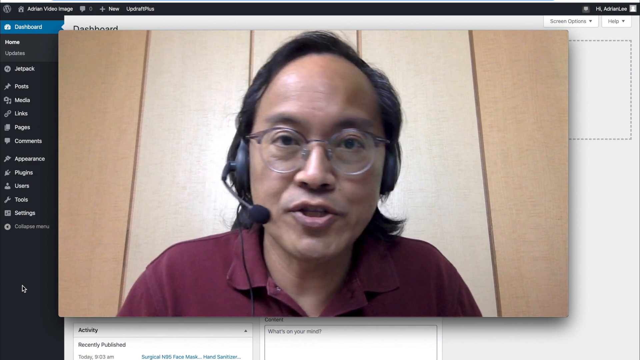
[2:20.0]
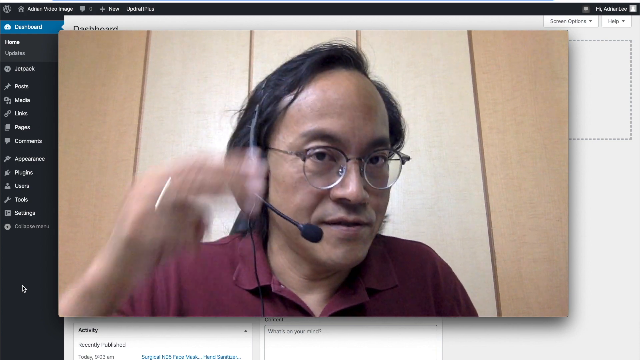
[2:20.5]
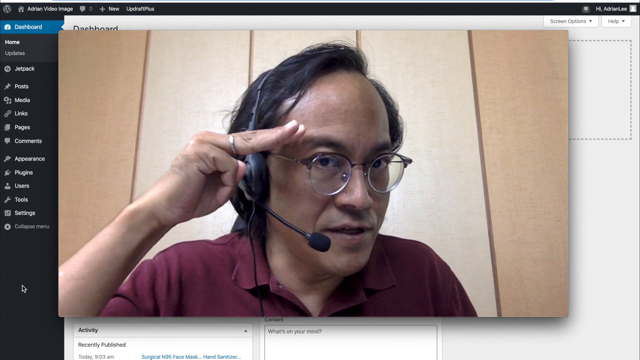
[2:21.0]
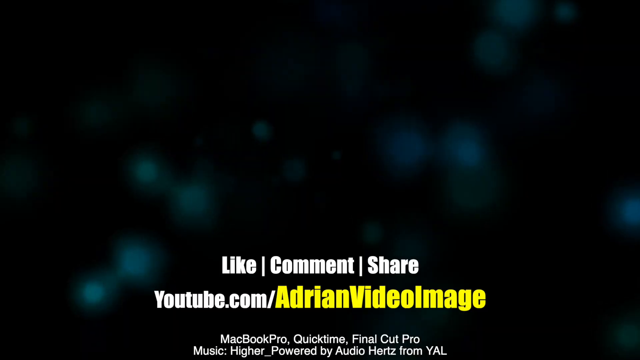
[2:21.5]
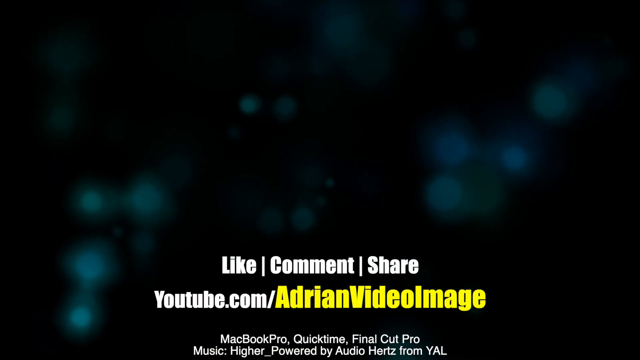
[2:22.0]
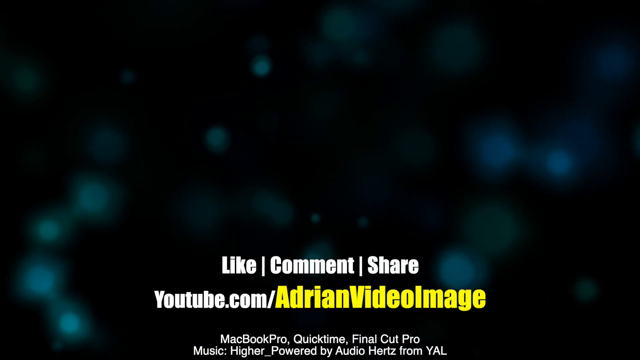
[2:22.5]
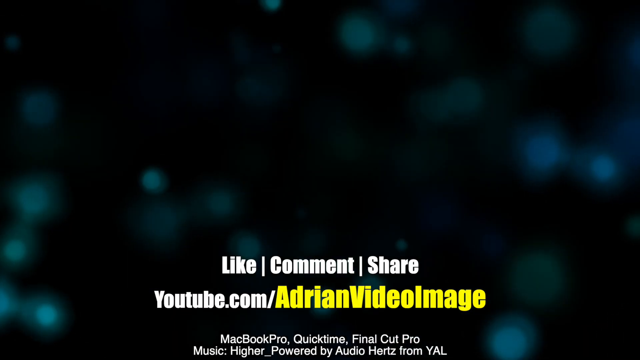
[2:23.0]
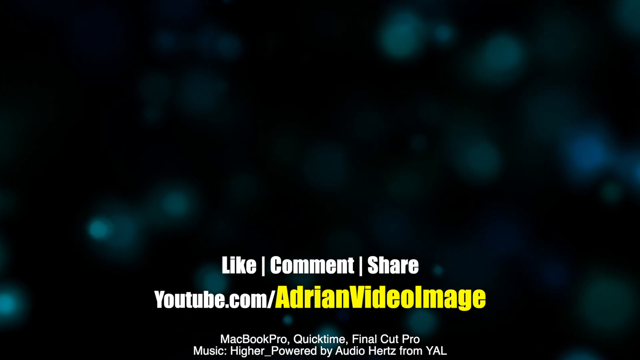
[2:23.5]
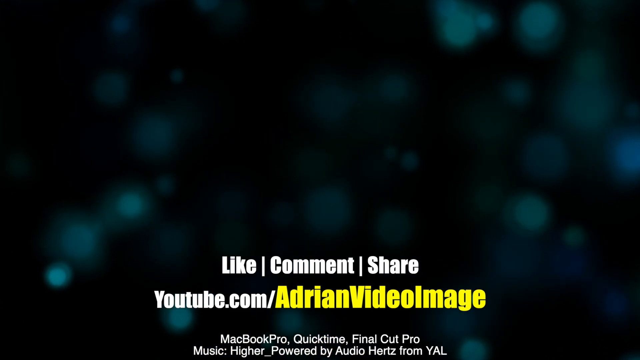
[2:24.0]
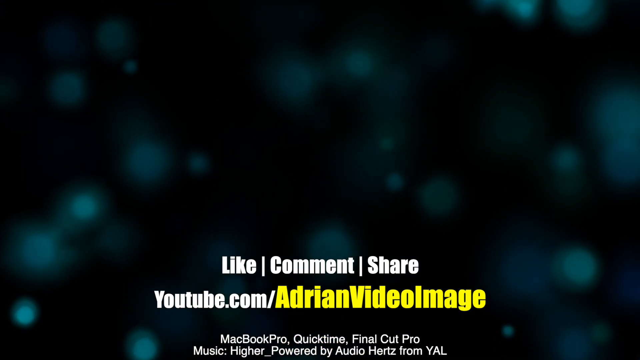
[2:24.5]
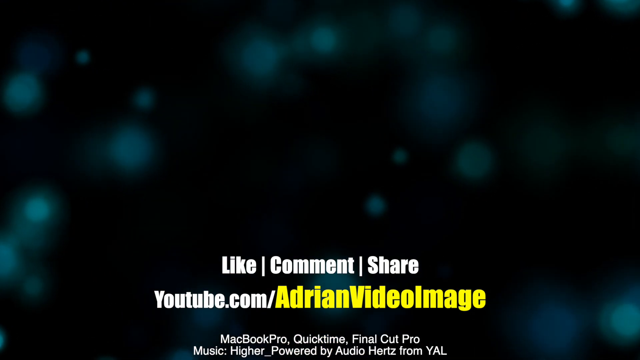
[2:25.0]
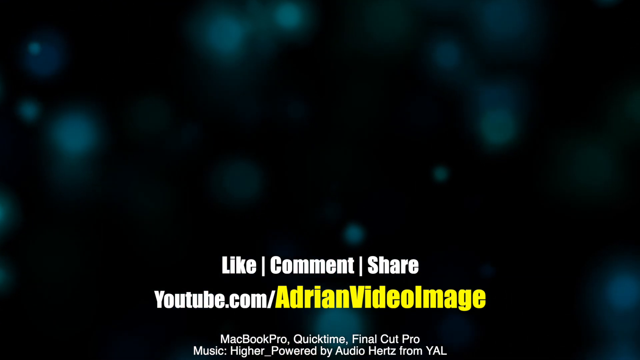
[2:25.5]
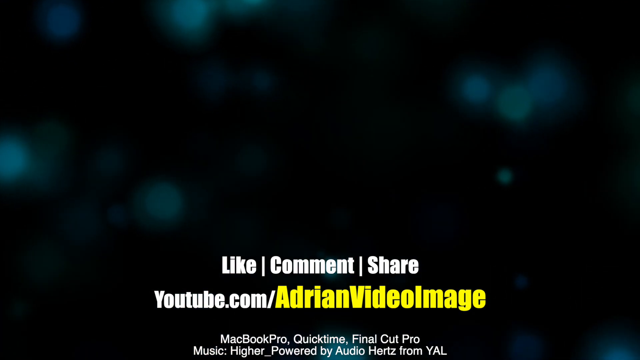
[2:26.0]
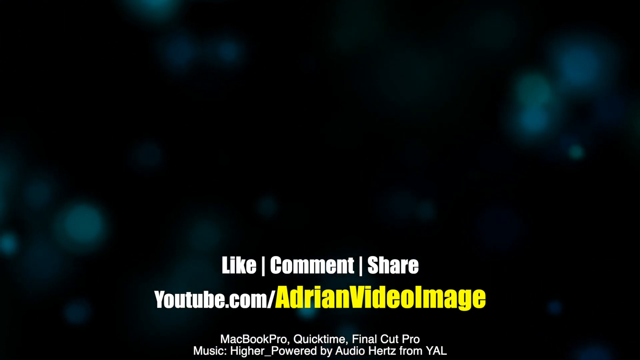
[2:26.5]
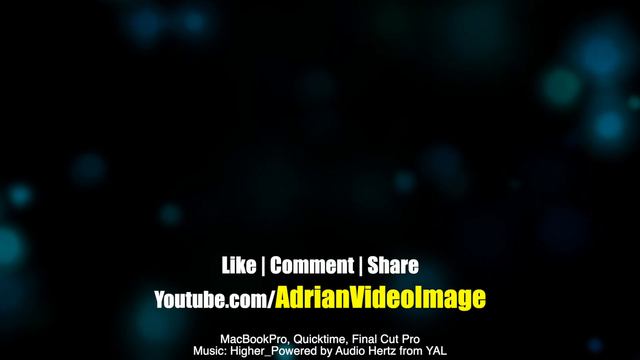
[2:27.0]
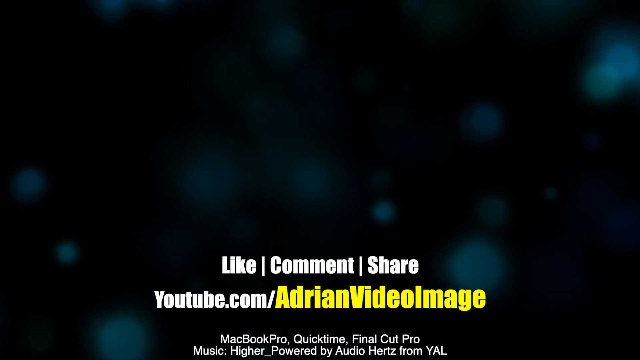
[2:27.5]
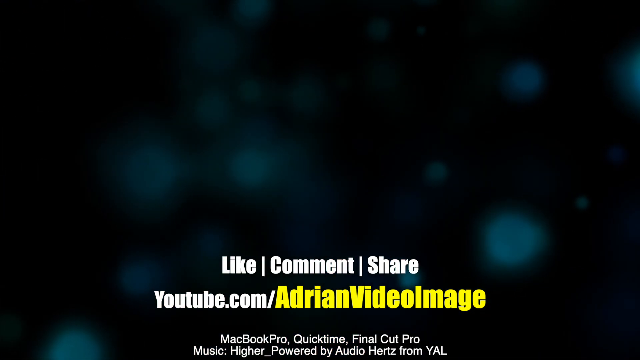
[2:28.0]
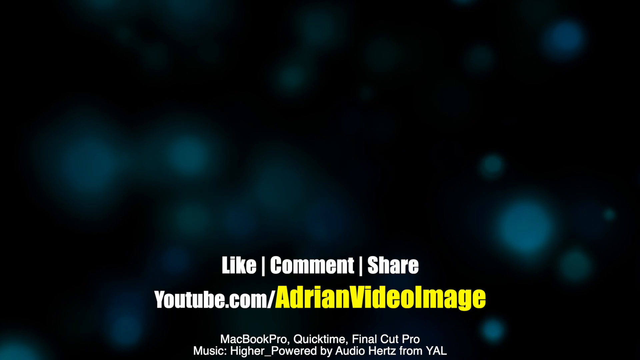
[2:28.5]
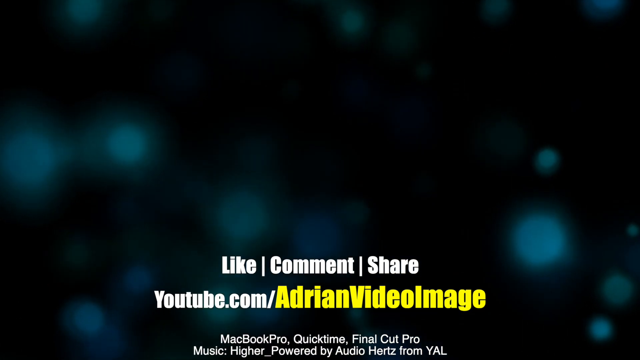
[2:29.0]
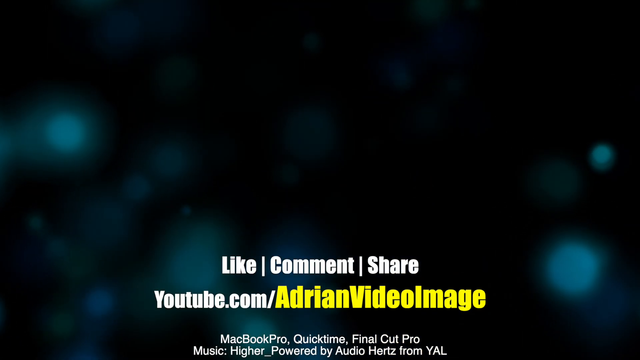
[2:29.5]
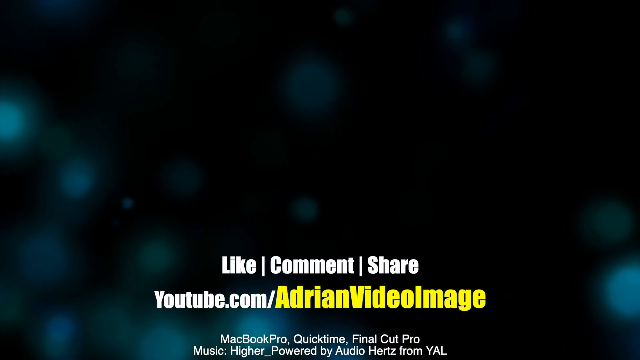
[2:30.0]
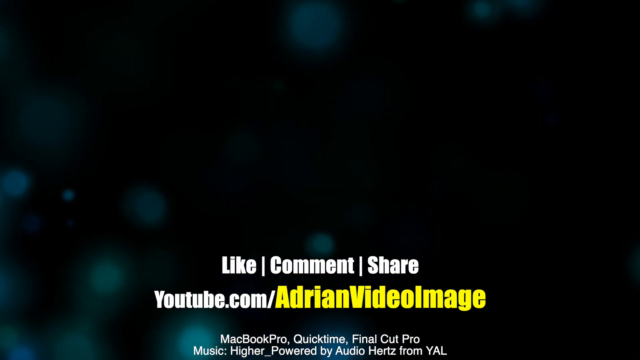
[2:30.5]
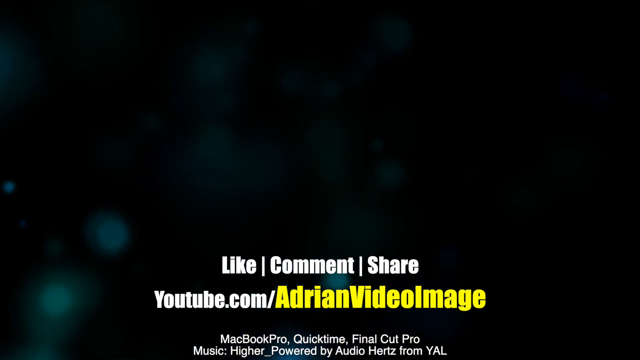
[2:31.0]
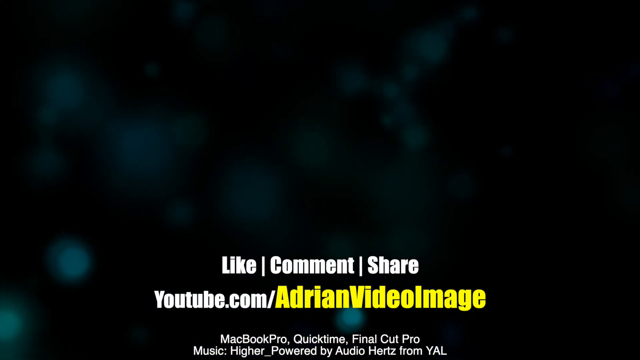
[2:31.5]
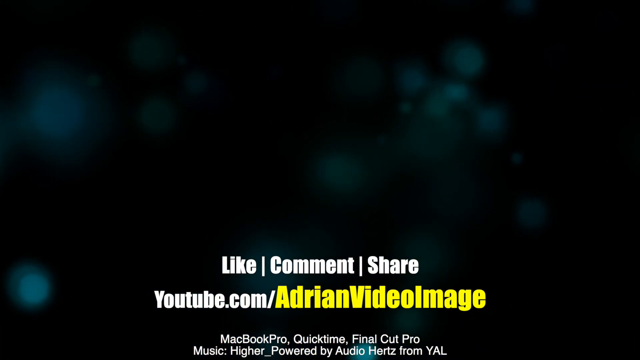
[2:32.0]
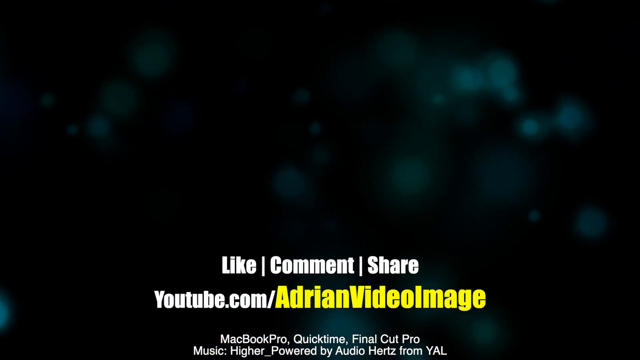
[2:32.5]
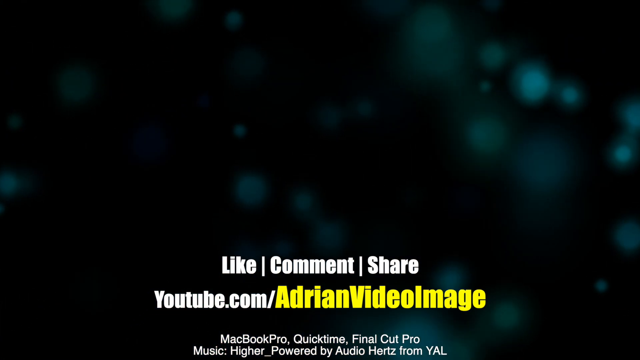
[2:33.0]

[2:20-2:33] A man appears on screen as if on a webcam, wearing a black headset with a microphone attached, glasses and a maroon shirt. He has black hair, looks Asian, and is in front of a tan background. He is talking and gives a salute. On-screen text reads "like, comment, share" and "youtube.com." The screen then turns black with blue specks moving across it.